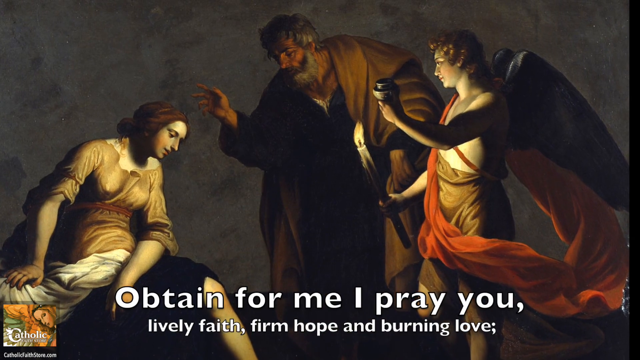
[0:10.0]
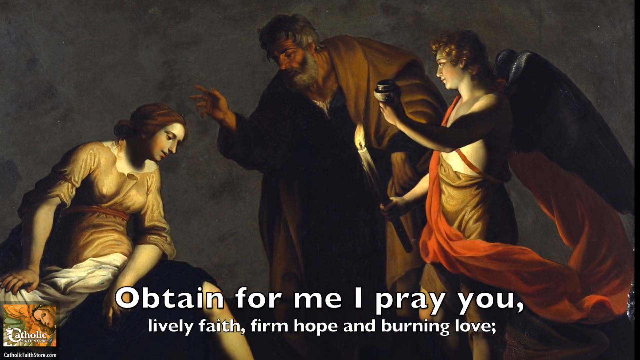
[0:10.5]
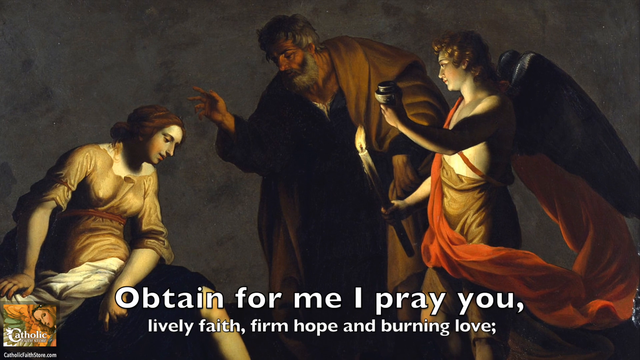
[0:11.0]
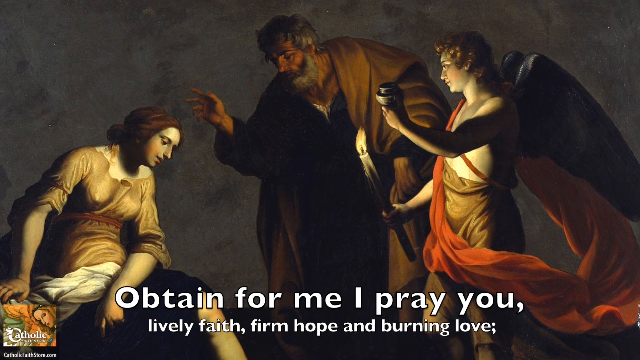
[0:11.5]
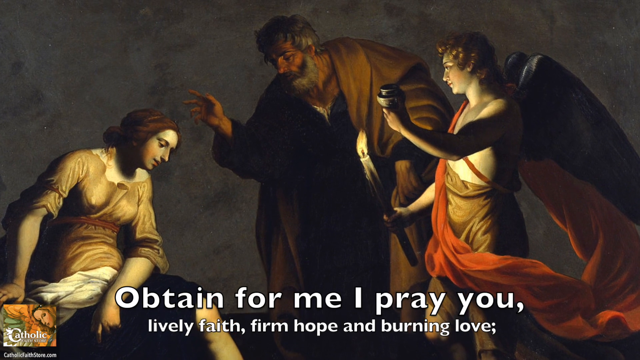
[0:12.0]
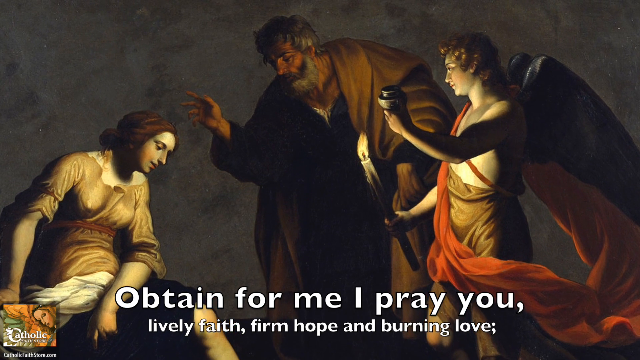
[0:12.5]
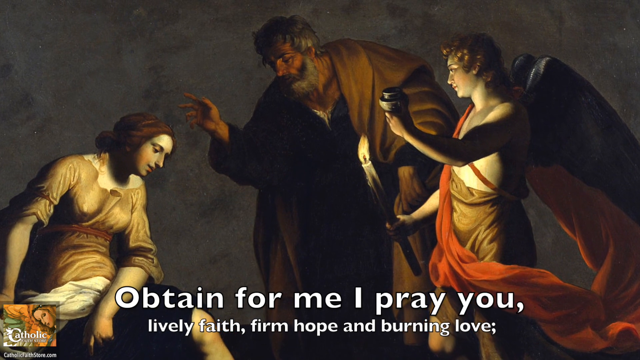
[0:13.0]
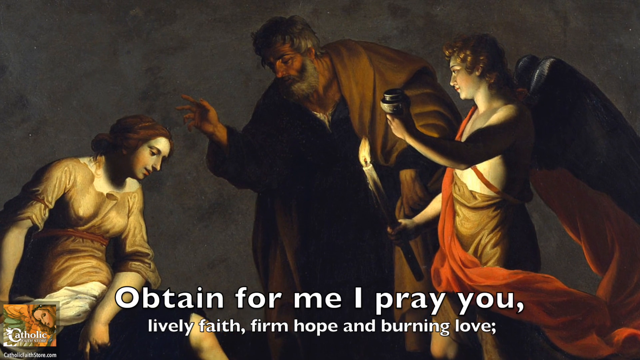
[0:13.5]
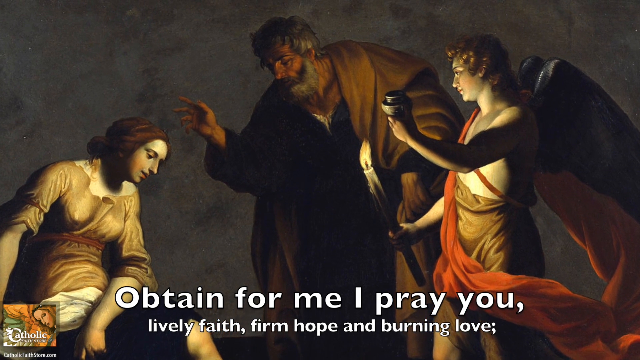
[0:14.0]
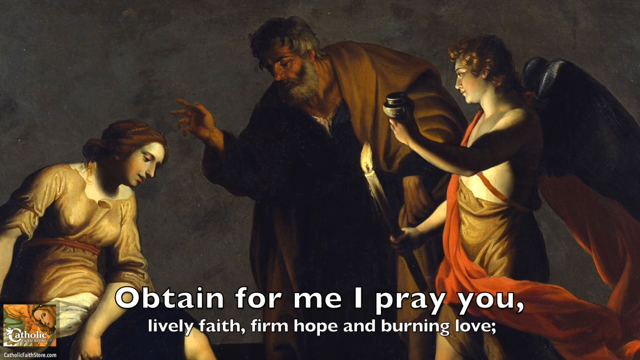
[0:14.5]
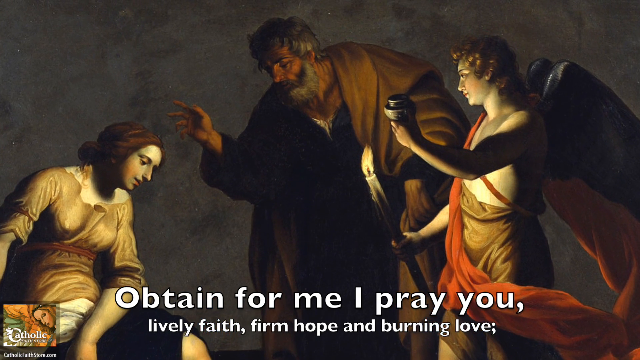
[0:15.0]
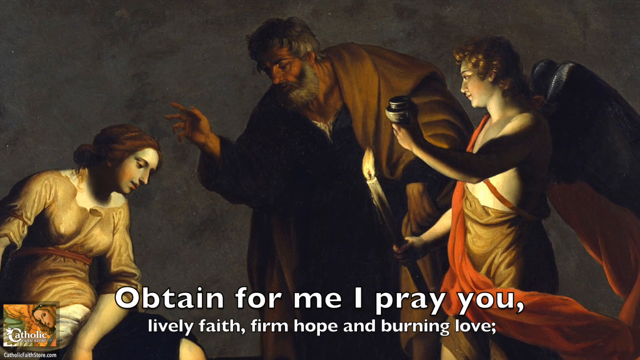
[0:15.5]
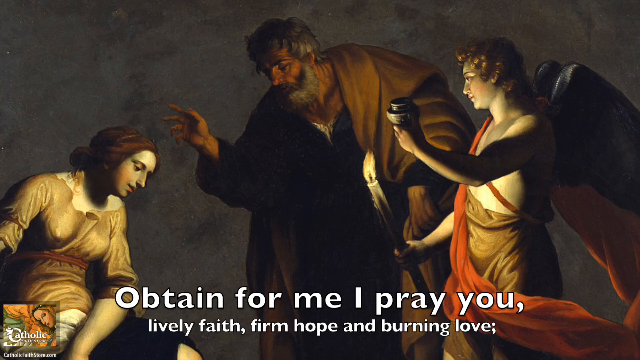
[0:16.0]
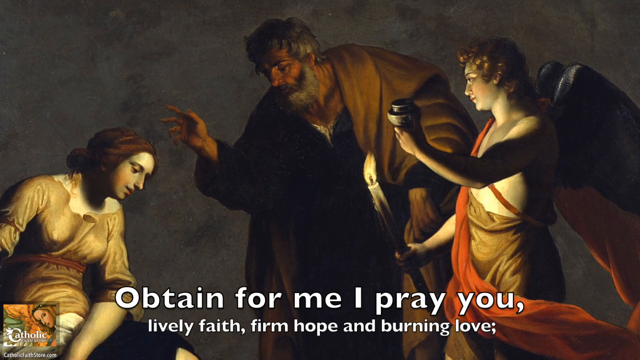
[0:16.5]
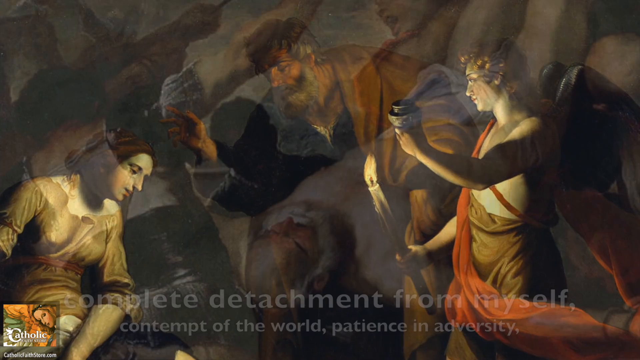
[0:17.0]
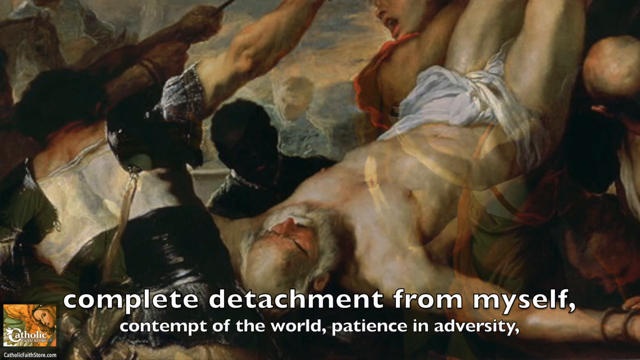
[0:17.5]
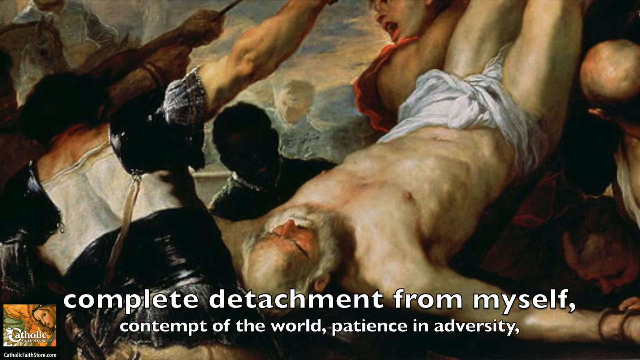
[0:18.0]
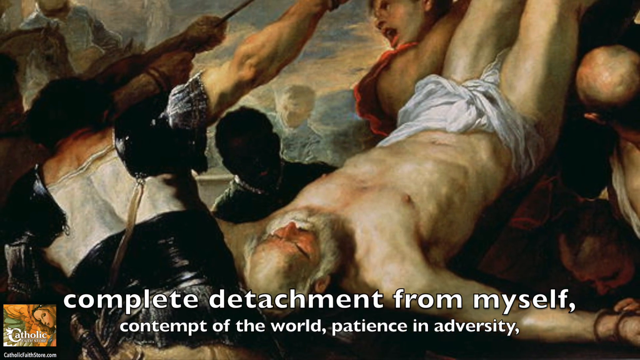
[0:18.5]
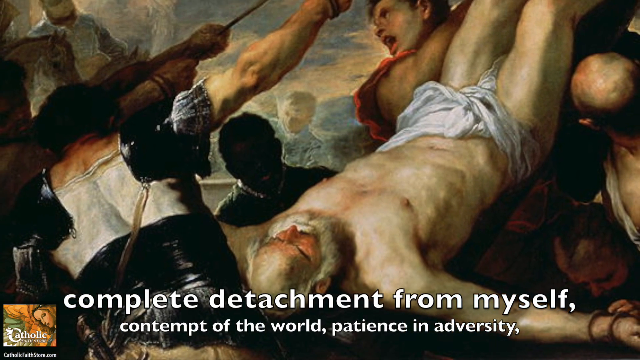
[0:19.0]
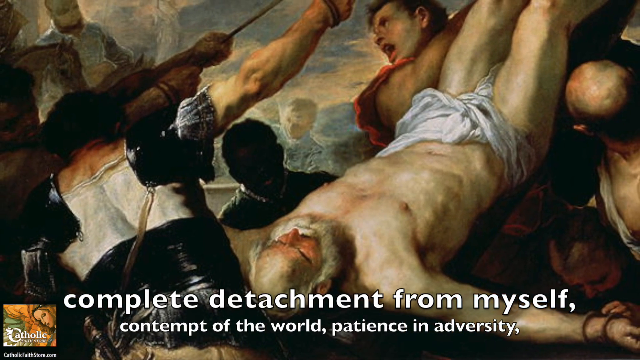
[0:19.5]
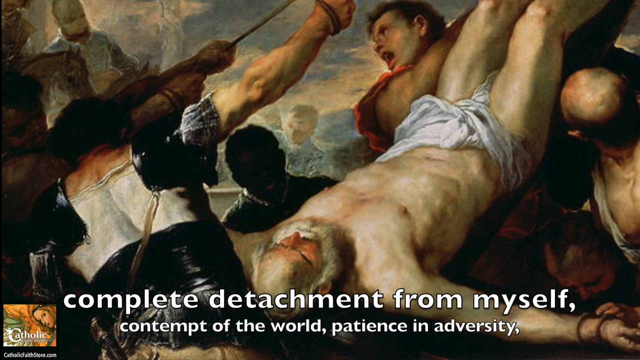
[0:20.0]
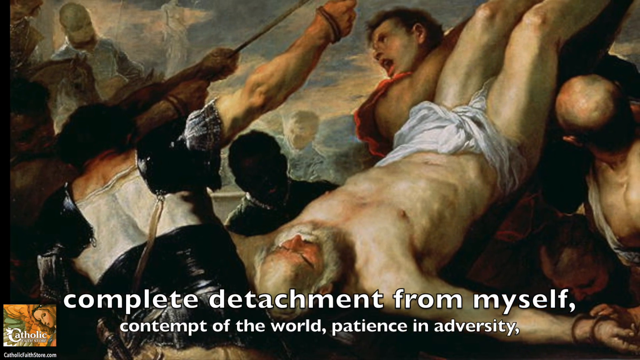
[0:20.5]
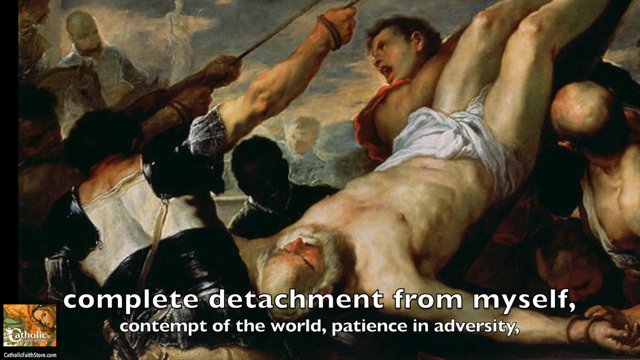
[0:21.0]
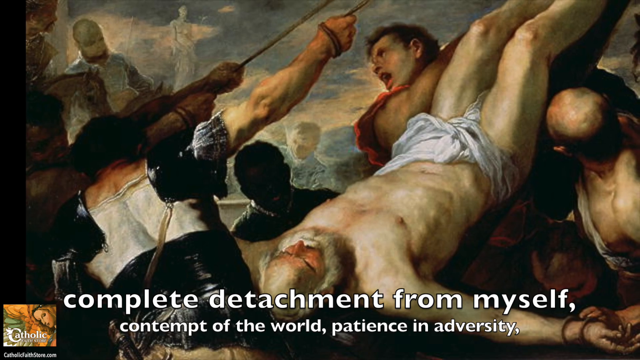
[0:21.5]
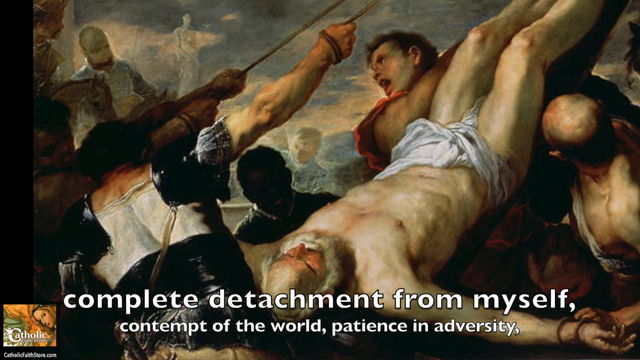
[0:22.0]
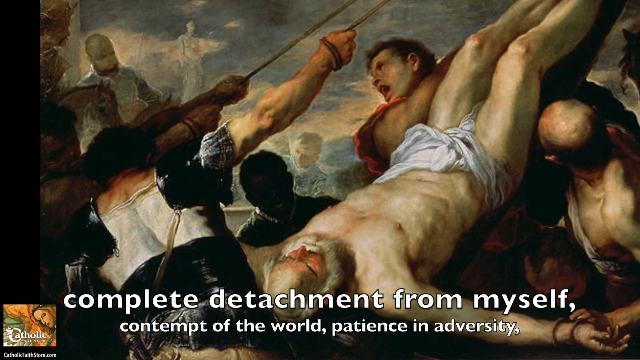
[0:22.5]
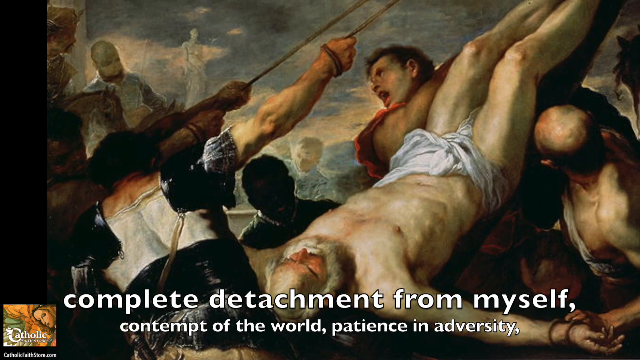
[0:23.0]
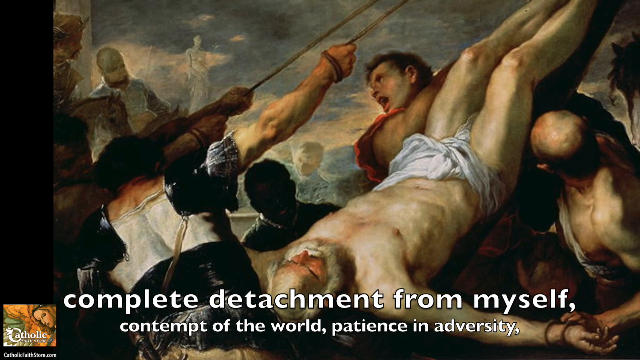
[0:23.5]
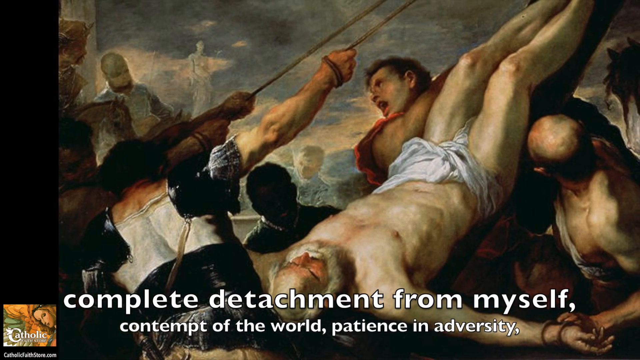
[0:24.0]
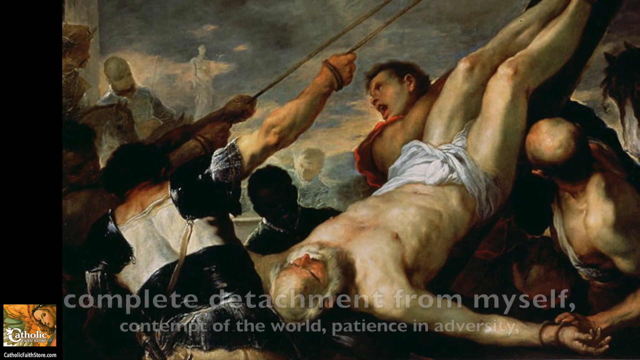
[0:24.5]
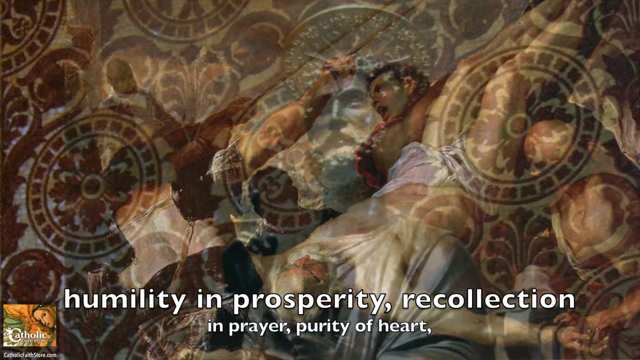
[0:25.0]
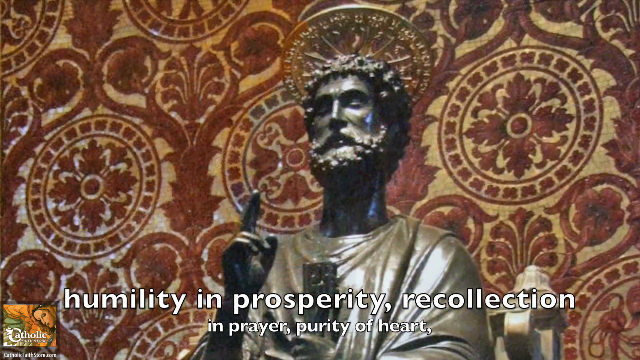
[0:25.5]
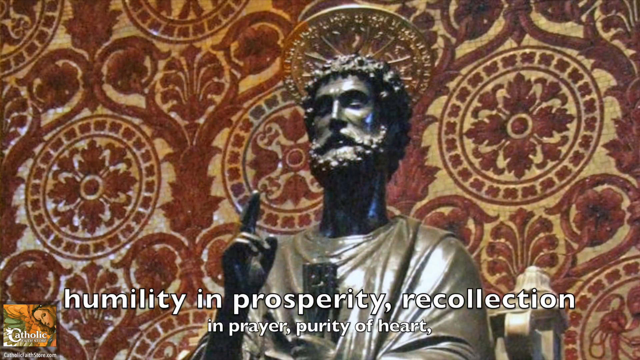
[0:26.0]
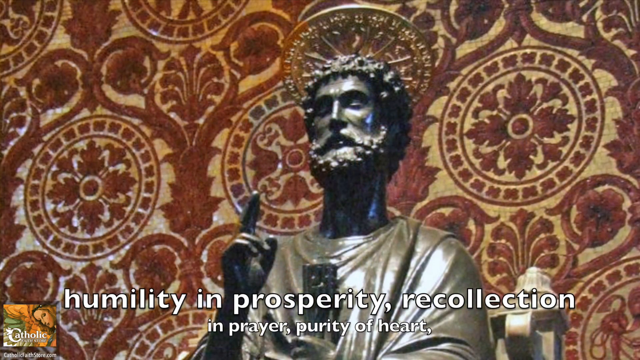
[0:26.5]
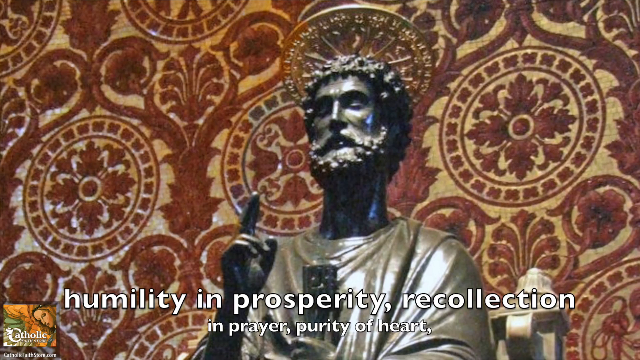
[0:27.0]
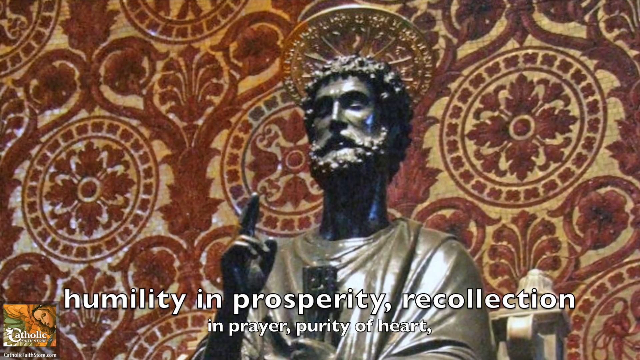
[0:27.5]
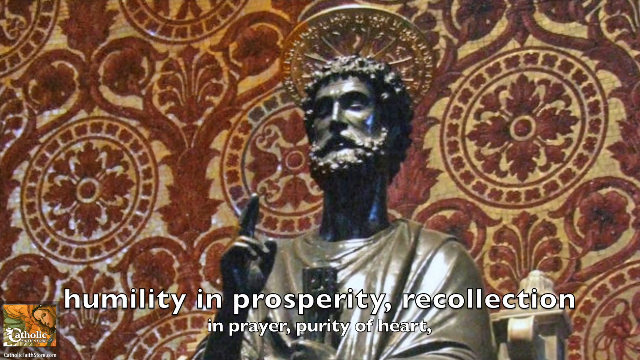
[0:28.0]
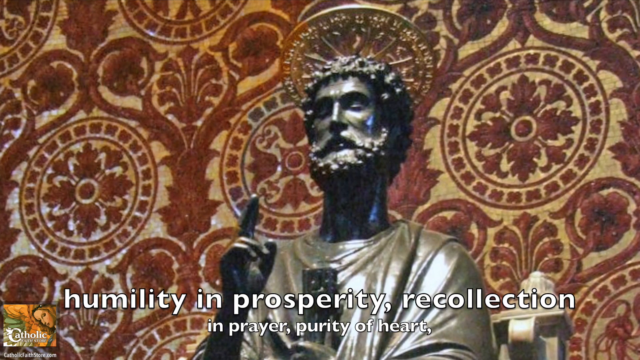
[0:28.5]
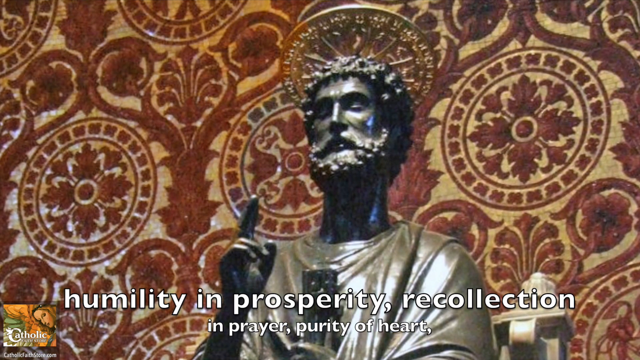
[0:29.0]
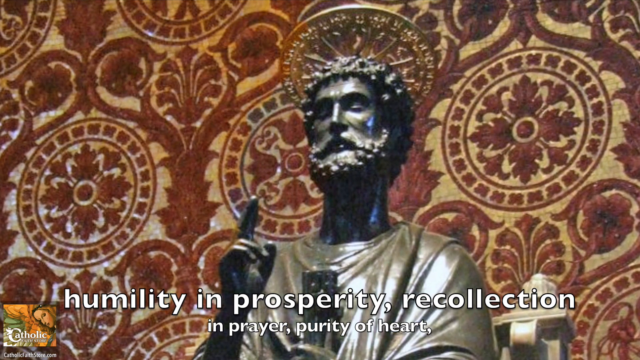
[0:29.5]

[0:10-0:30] The woman on the left leans over as if about to receive the man's blessing. On the right is a third figure that looks like an angel. It wears no shirt but has brown shorts, and a red sash, very loose and flowing, is draped over its right shoulder and goes down behind it. It holds a large candle in its right hand and a small bowl in its left, and wings come off its back. The man in the middle wears a black shirt under his brown robe and has gray hair and a beard. The woman on the left has brown hair and wears a golden-colored gown with a brown waistband. She leans on her left elbow, her right hand off to her right side, and her eyes appear to be closed. A quote at the bottom reads, "complete detachment from myself, contempt of the world, patience in adversity." Next comes a painting of what looks like a man lying on his back. He is bald with gray hair and wears basically just a loincloth around his waist. Both arms are out to his sides, and he looks like he is being strapped to something. On the left, a man reaches up with his right hand to grab a rope, which is wrapped around his wrist.